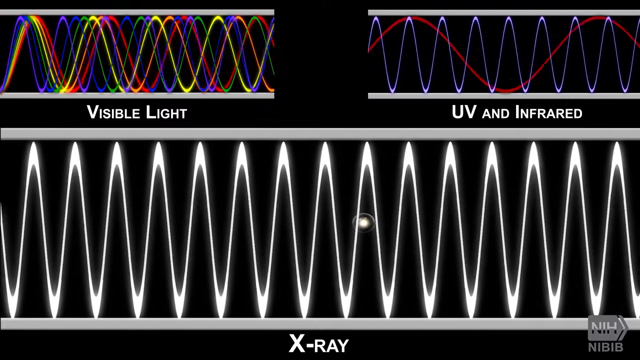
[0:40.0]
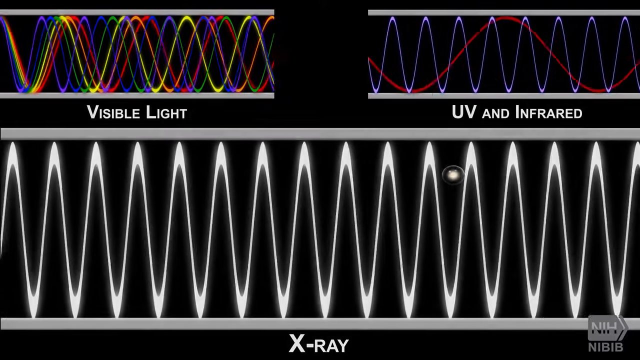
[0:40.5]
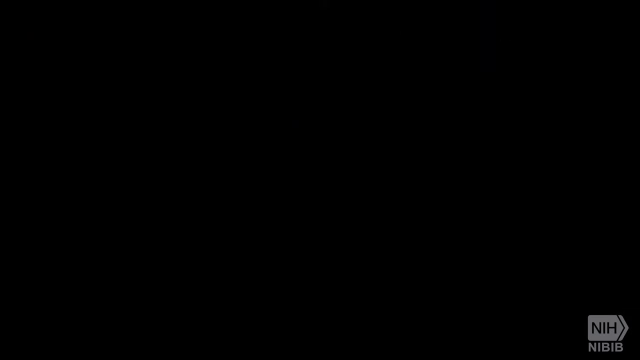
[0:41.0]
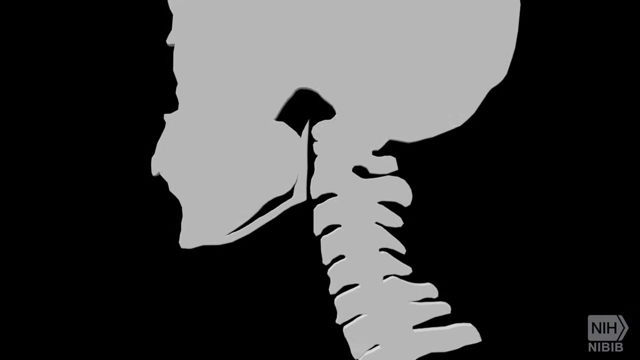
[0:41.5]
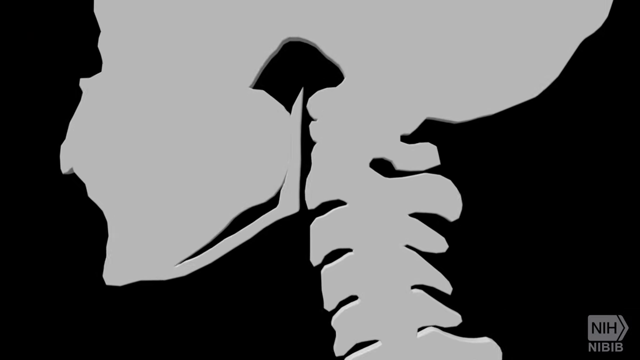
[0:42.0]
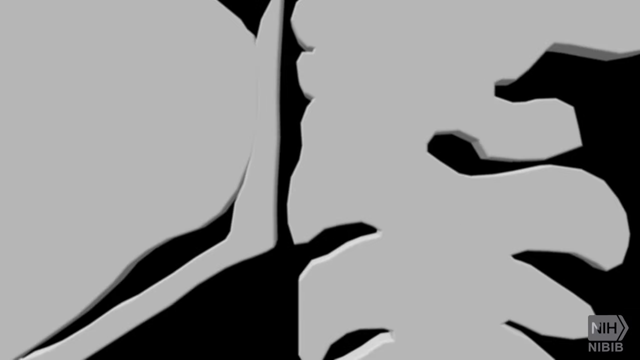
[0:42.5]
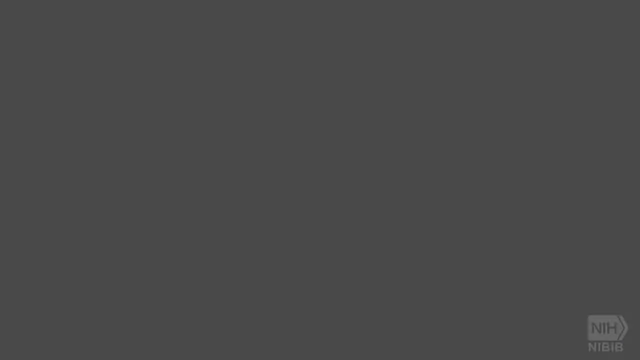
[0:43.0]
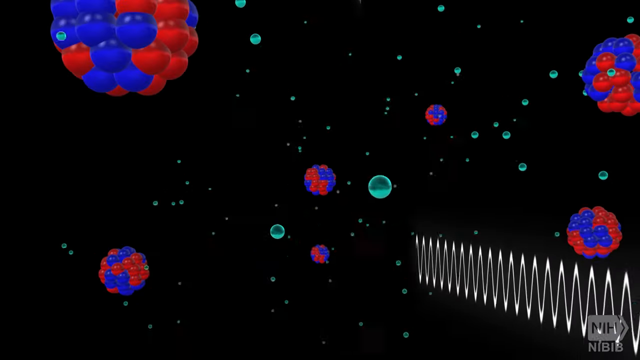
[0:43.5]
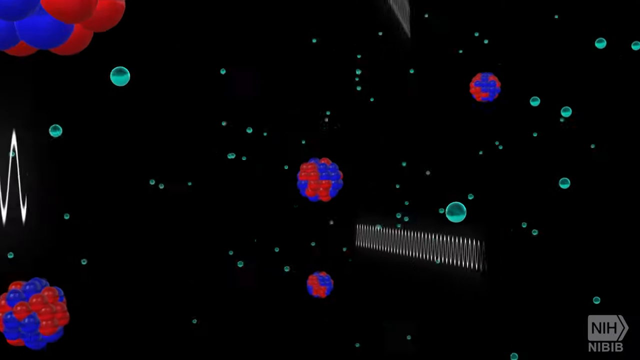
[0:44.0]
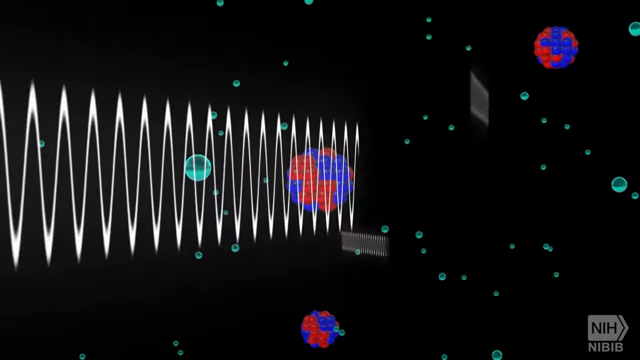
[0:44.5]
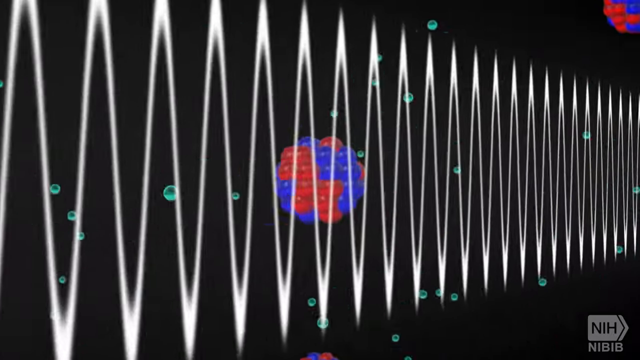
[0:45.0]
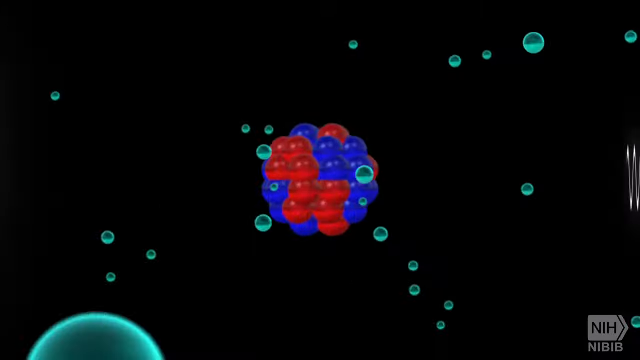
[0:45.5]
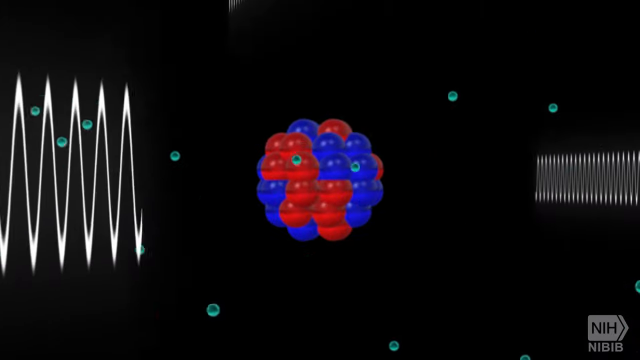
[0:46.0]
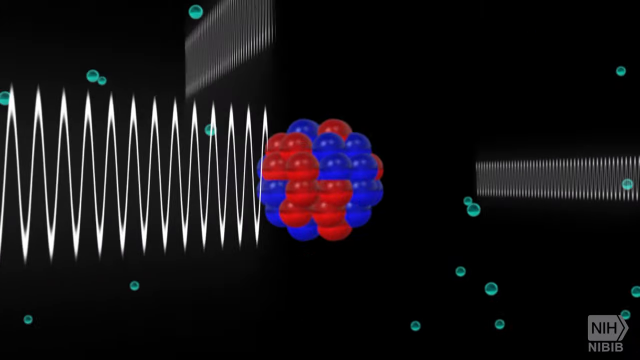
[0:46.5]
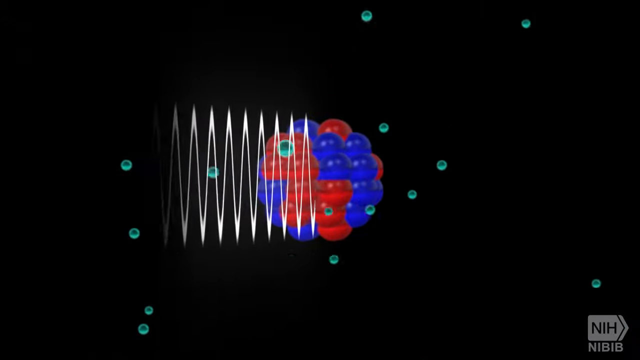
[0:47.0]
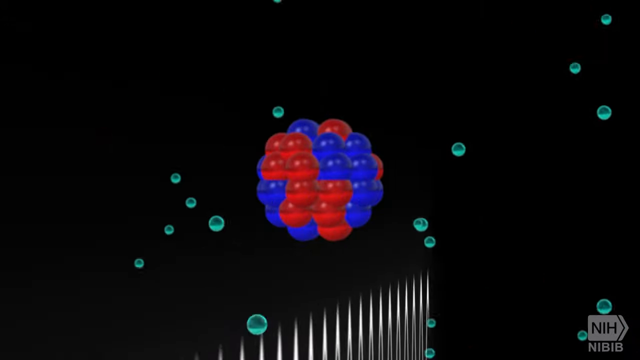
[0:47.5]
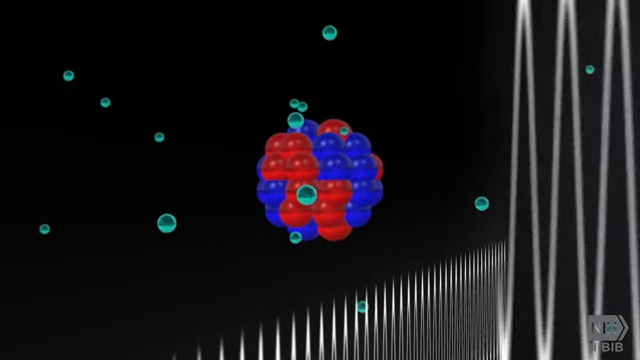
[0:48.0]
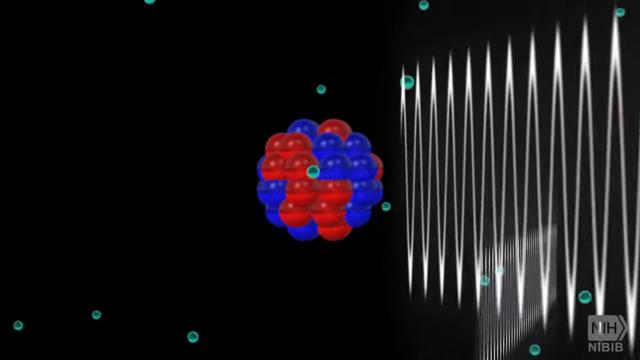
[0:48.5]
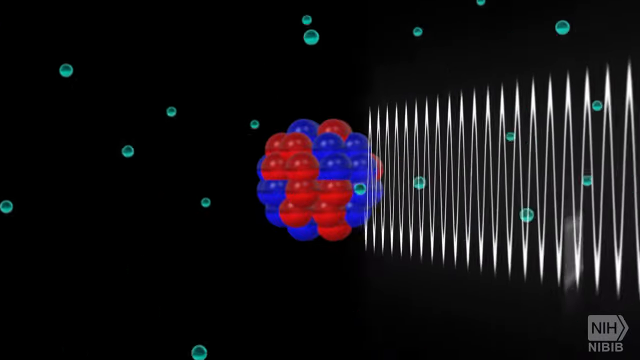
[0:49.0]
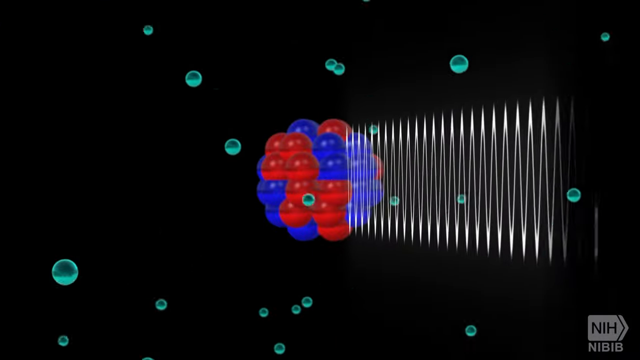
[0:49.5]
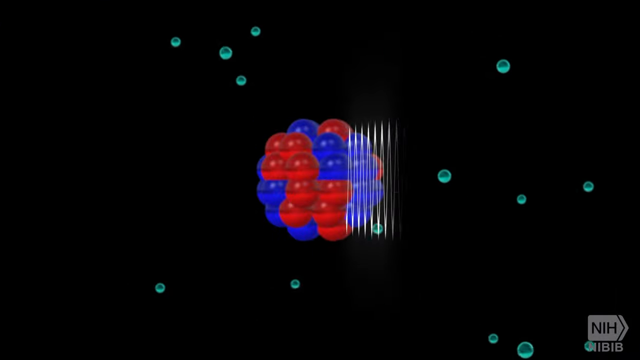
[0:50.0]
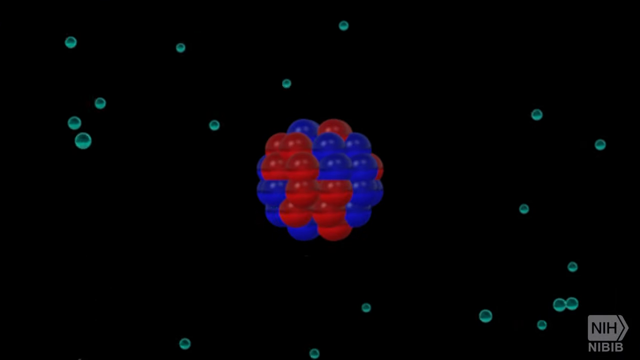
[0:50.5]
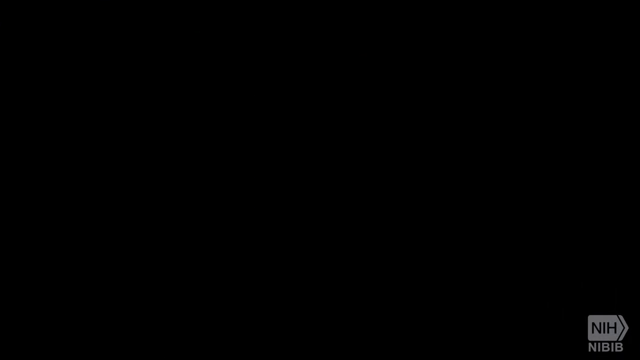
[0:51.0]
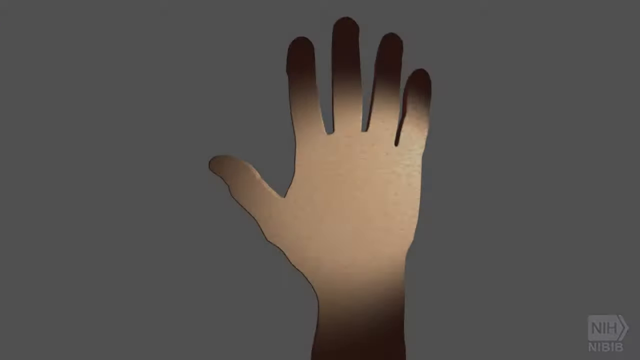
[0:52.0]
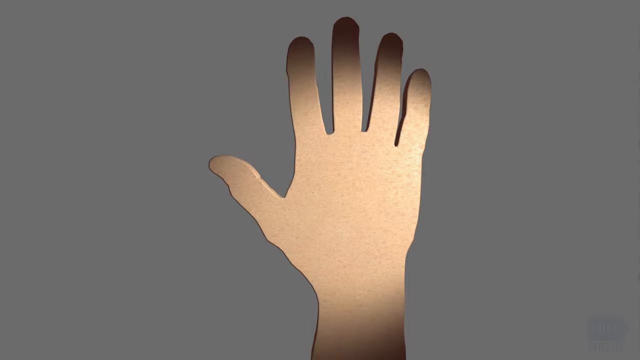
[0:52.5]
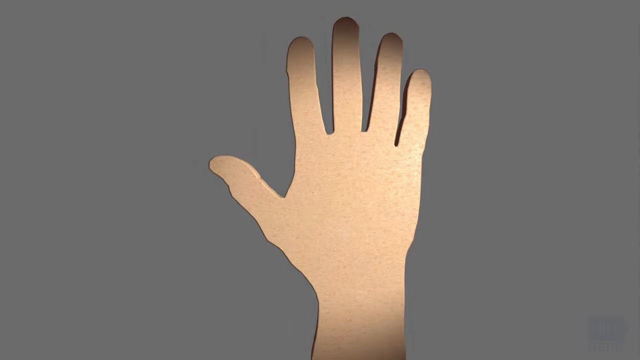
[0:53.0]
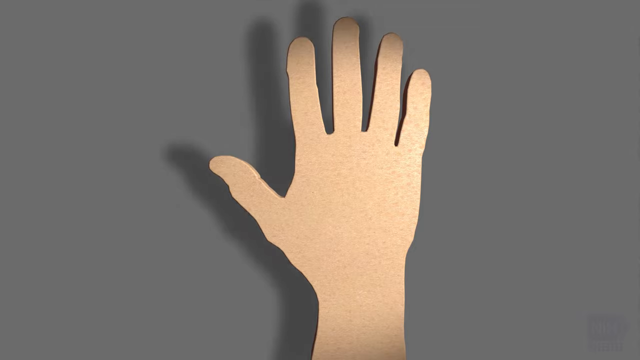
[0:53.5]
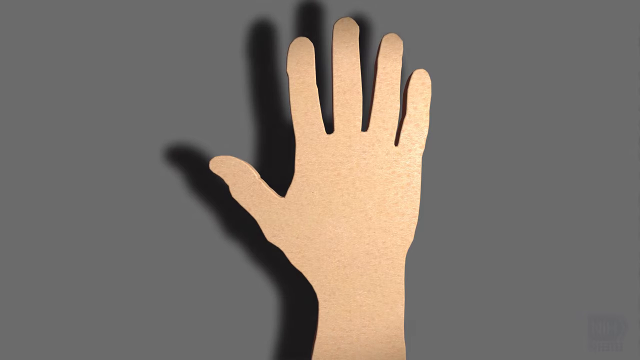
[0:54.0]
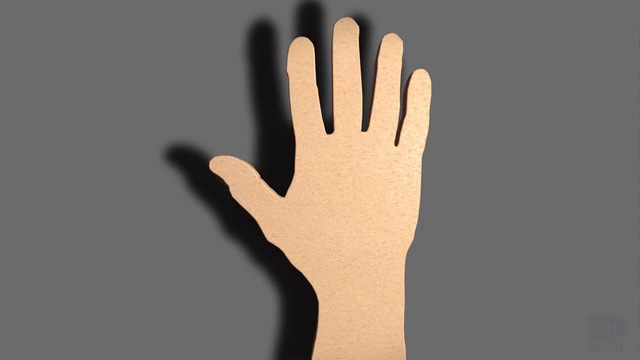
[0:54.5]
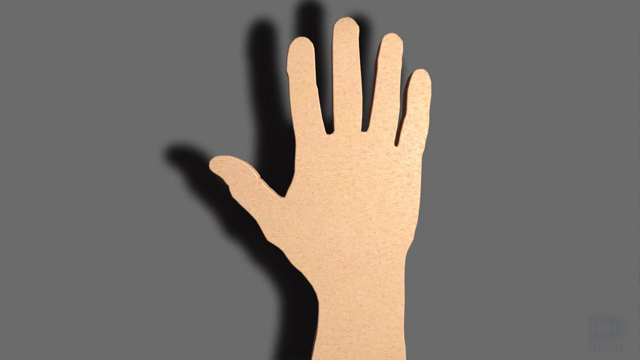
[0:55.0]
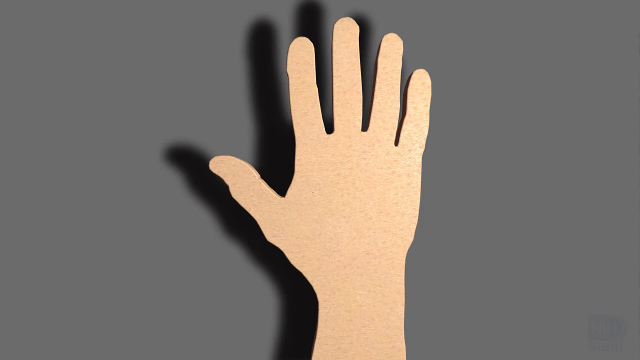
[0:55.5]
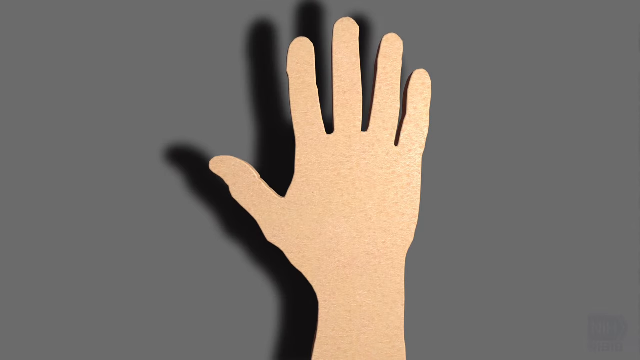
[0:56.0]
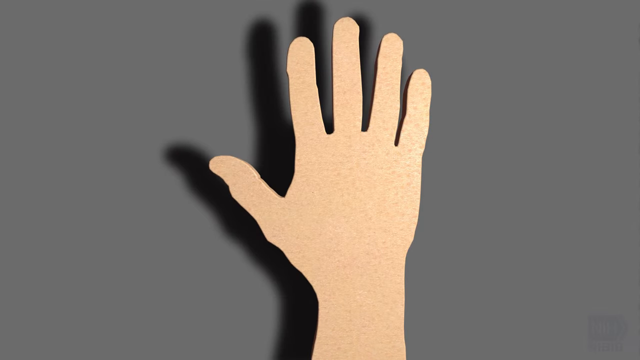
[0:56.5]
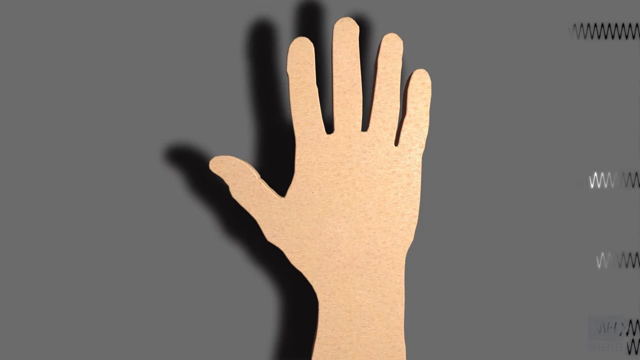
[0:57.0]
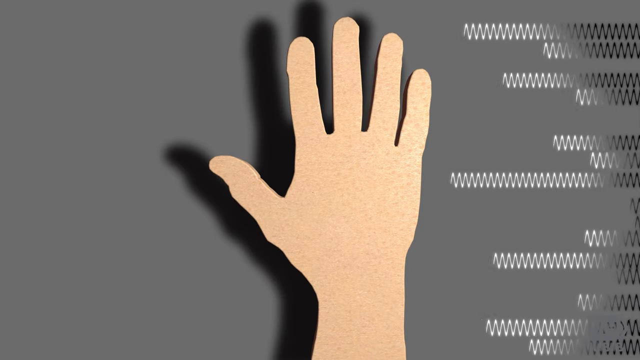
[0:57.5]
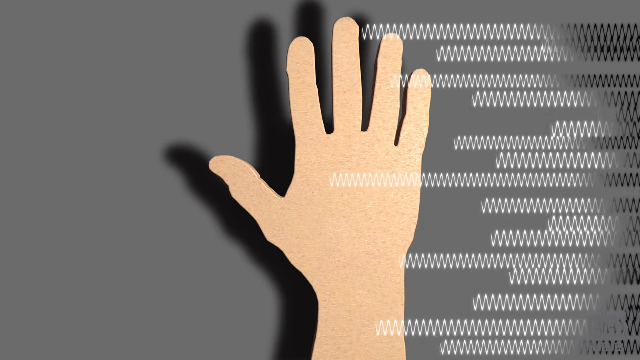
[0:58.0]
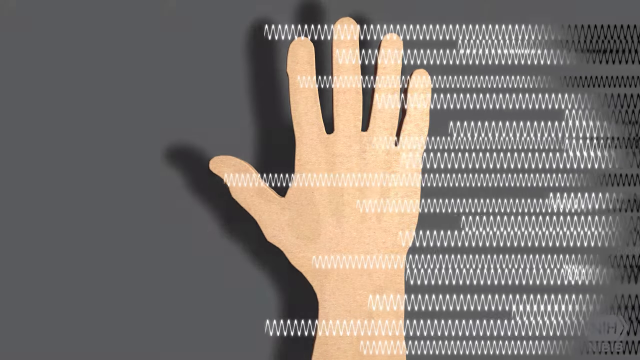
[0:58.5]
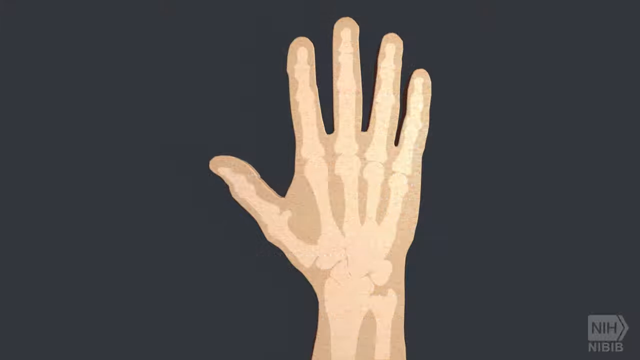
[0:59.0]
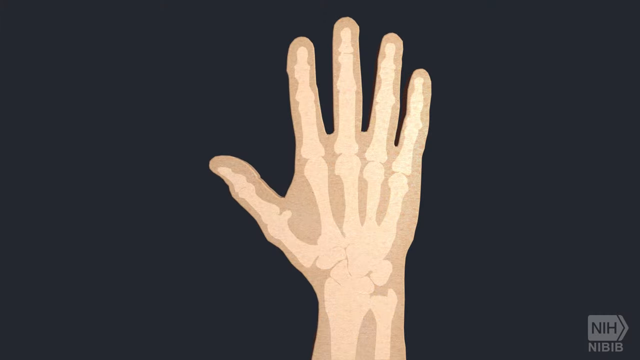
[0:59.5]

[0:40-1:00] A side profile of a digitized-looking rendering of a human skull and neck appears, showing only from the neck upward and part of the skull. The video zooms in very quickly toward roughly the mandible area or the upper cervical vertebrae, then cuts to a black screen that reveals various small turquoise circles kind of floating around, along with a couple of clusters of small red and blue balls resembling a molecule representation. White wavelength lines travel diagonally across the screen from left to right, decreasing as they get further away. The view kind of shifts around, showing more wavelength lines passing through a single cluster of red and blue molecules or cells, and they then disappear into this cluster. More radio waves or wavelengths travel diagonally from the right side toward the left through the cluster of red and blue orbs. The screen goes black and shows a digitally rendered human hand with Caucasian skin color placed against a gray background. The hand is illuminated, revealing a shadow on the gray background behind it. Multiple horizontal rows of wavelengths travel across the screen from left to right, then stop and are seemingly absorbed into the hand. As the wavelengths reach the hand, the skin becomes translucent and reveals the skeletal bones underneath.